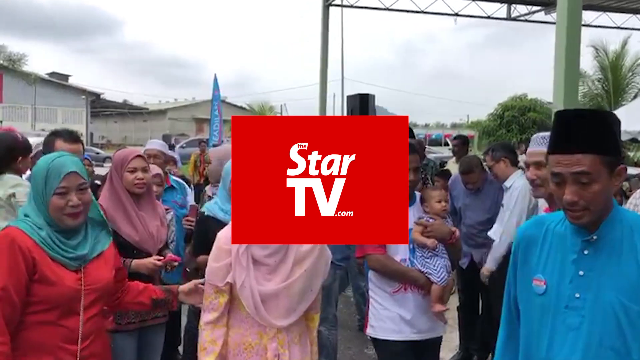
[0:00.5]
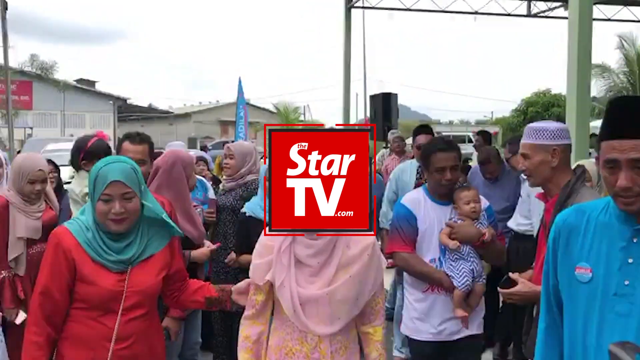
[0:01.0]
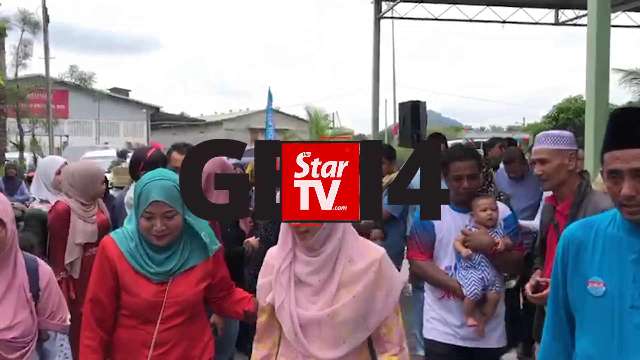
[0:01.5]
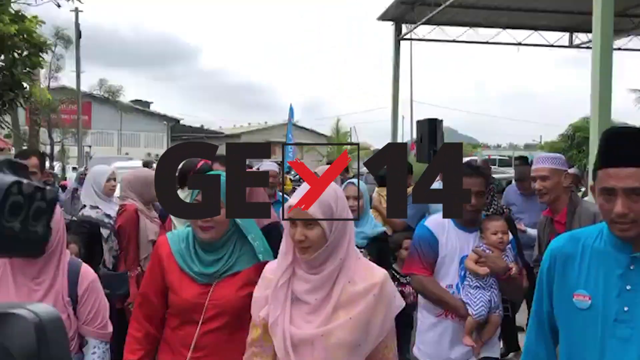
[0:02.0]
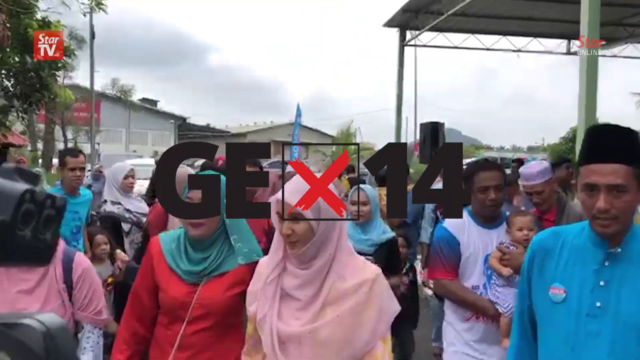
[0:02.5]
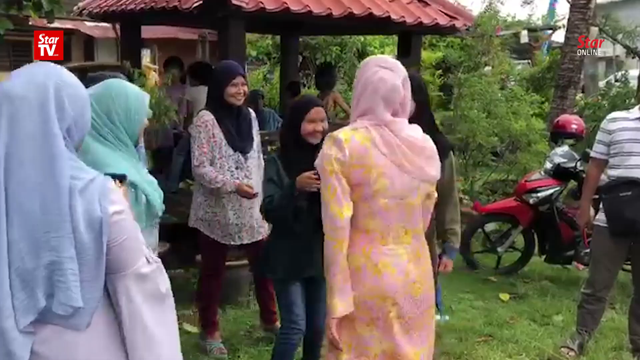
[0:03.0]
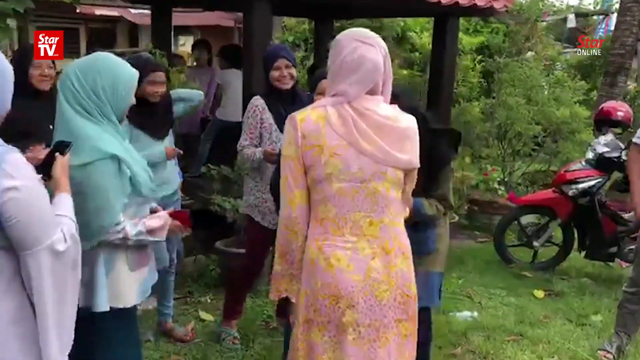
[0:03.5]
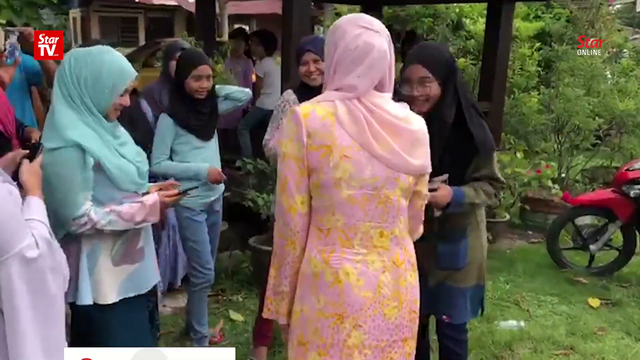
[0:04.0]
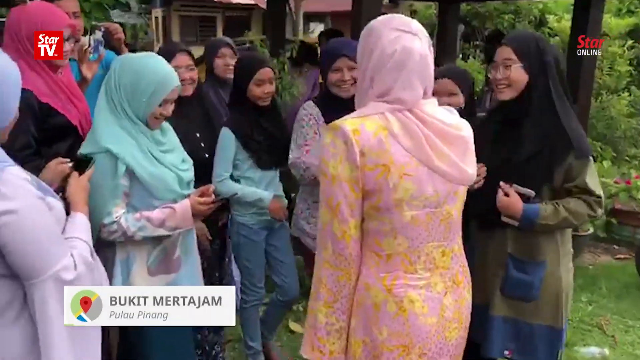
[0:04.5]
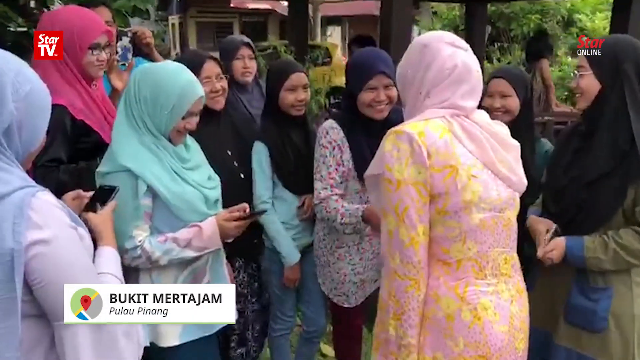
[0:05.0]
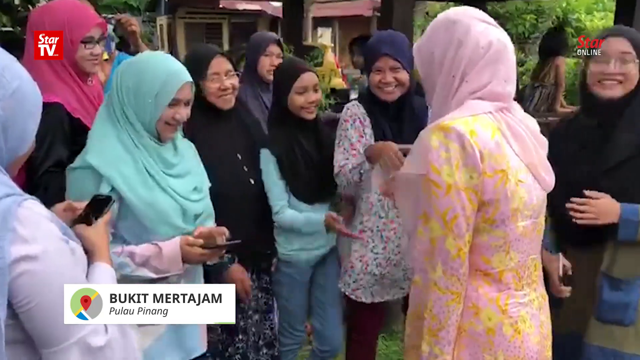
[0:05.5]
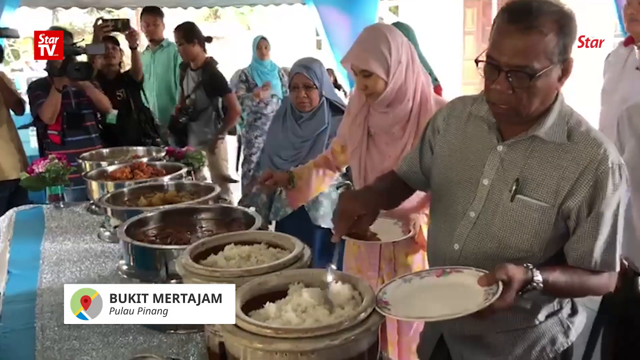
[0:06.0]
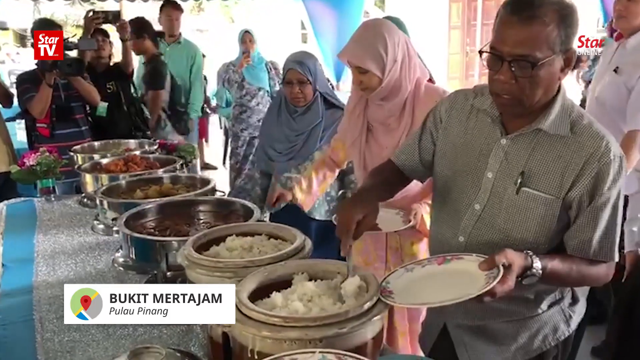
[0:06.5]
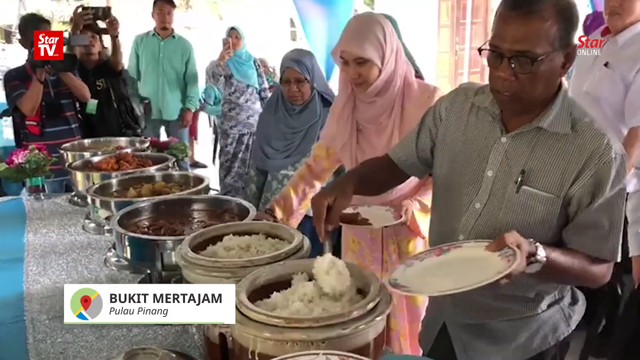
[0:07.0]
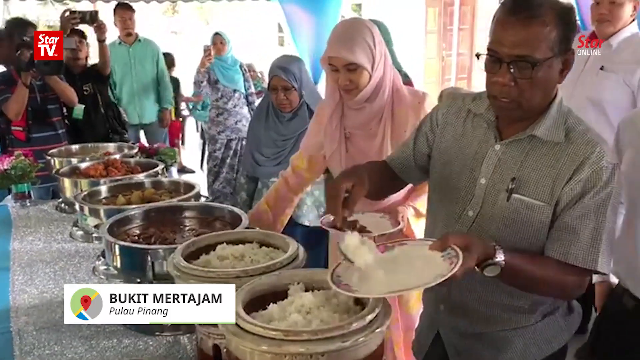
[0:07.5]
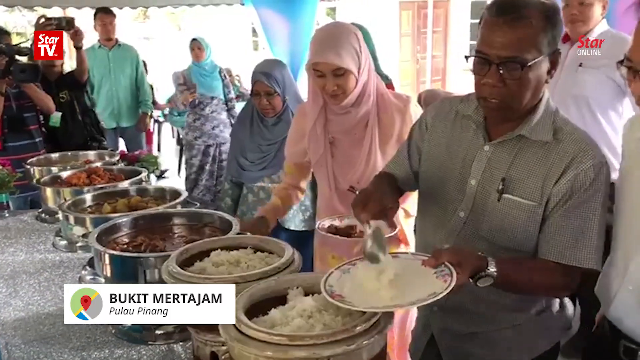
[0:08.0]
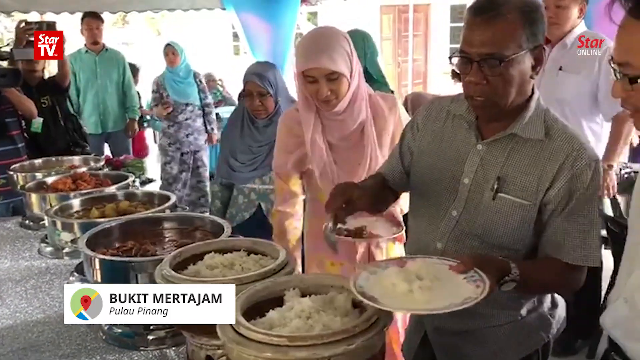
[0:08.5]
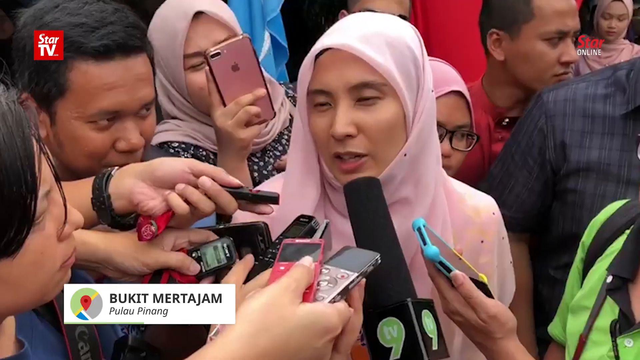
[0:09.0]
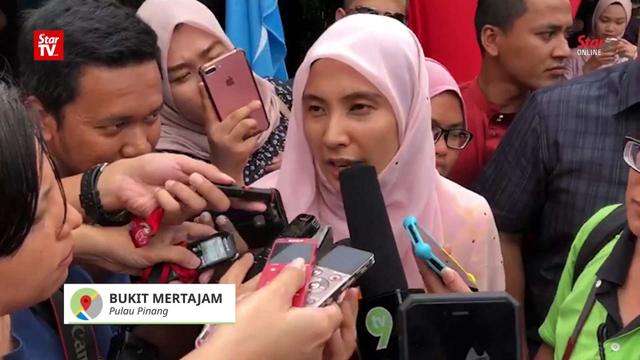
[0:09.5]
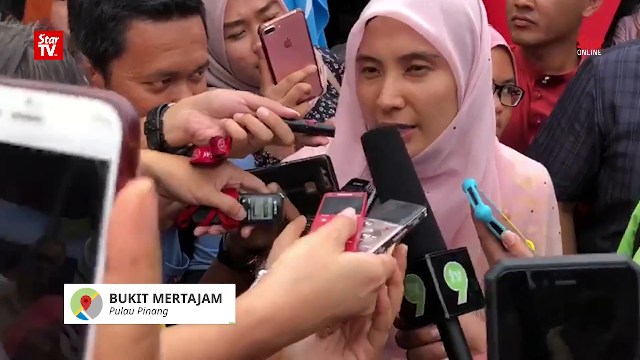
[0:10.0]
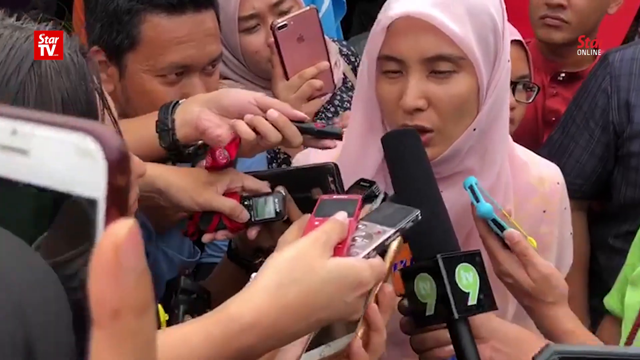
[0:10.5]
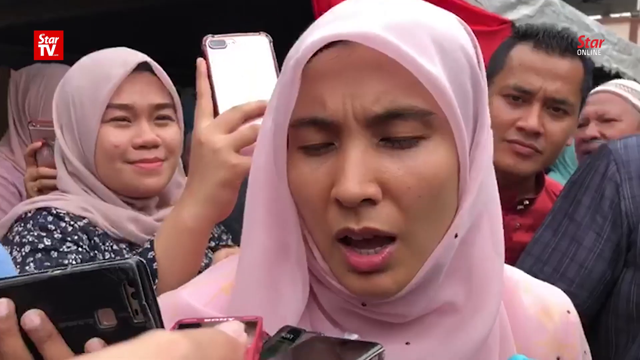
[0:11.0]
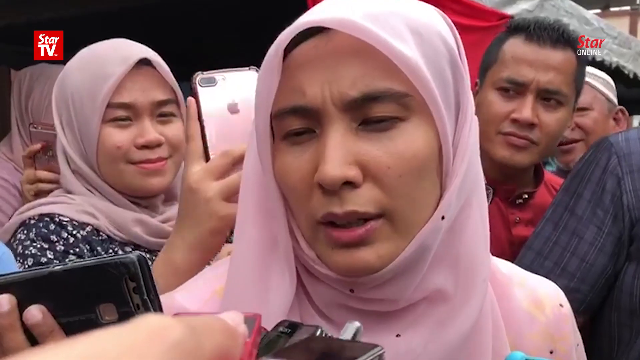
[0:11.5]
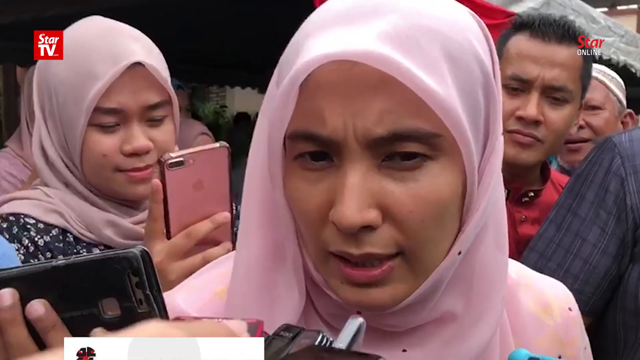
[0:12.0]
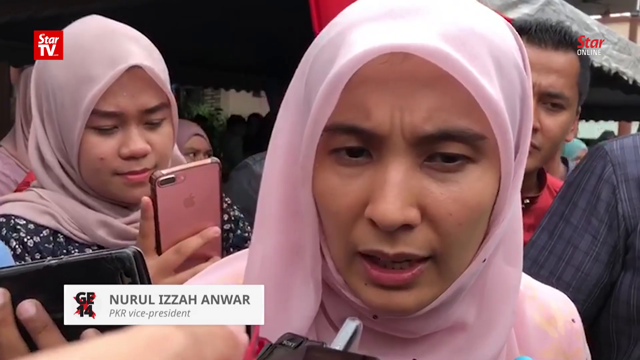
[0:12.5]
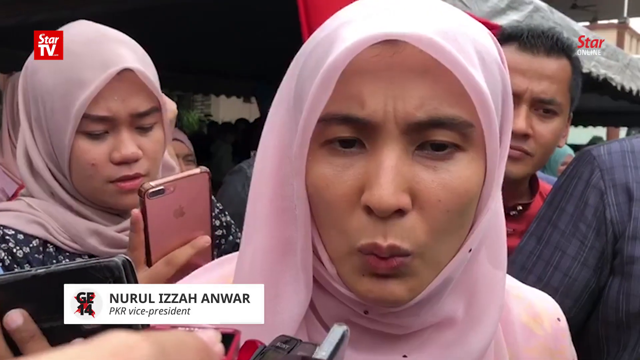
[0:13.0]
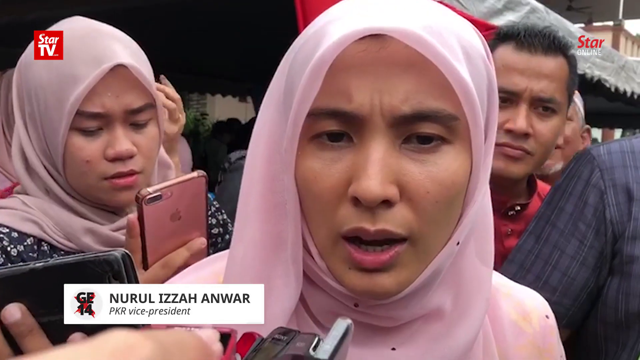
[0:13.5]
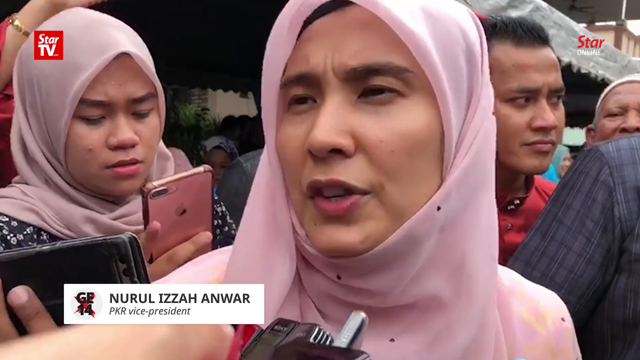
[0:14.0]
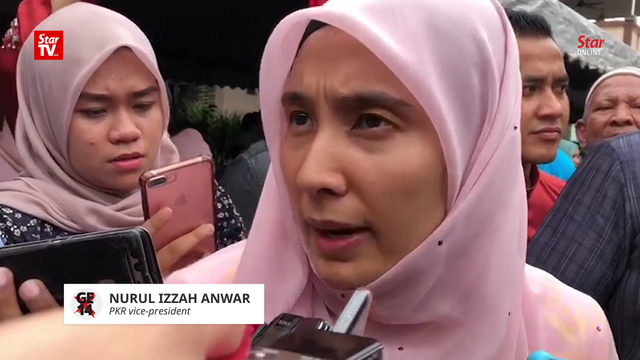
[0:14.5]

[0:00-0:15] This video is from Star TV and is titled Quit Griping About Cabinet Posts. It opens with women in hijabs and traditional Middle Eastern clothing walking down a village street. It then switches to a woman speaking to a group of people holding microphones, and a graphic appears showing her name in a small white box. Next, a woman in a tent serves food onto a plate from a buffet setup. The woman then shakes hands with other people in a little town, and the video cuts back to her speaking to a group of reporters. It appears to be footage from a different country of a woman running for office.